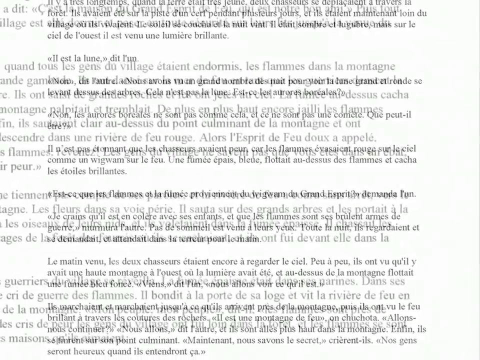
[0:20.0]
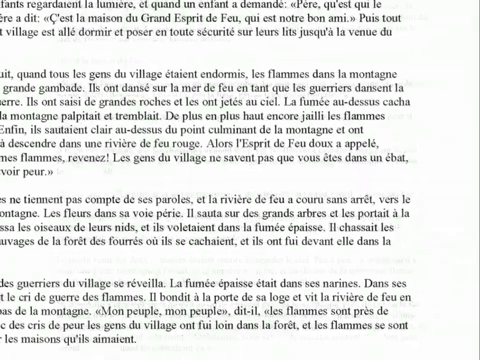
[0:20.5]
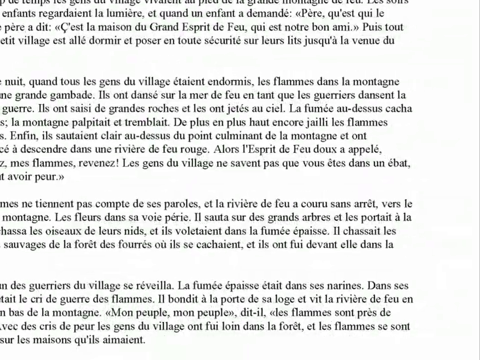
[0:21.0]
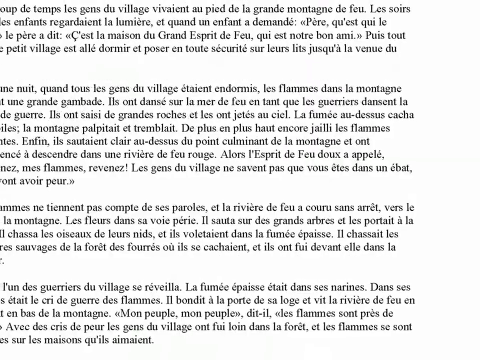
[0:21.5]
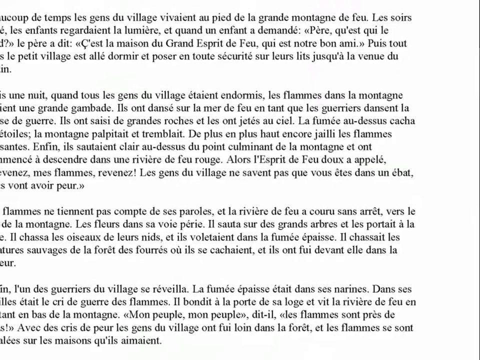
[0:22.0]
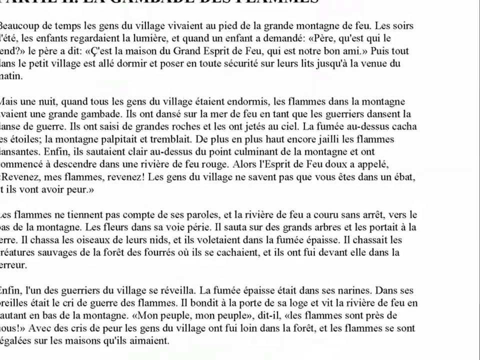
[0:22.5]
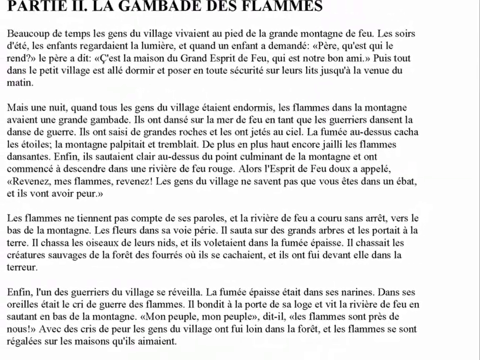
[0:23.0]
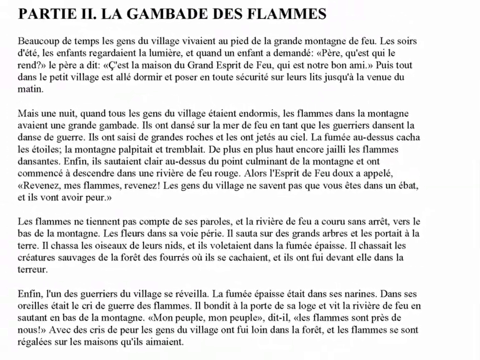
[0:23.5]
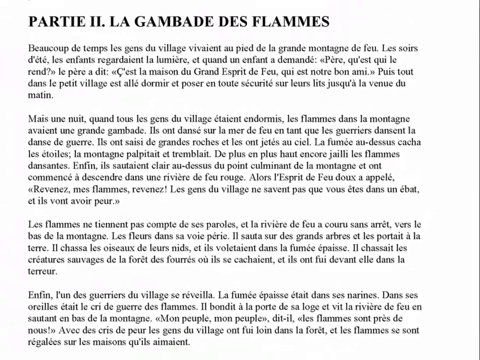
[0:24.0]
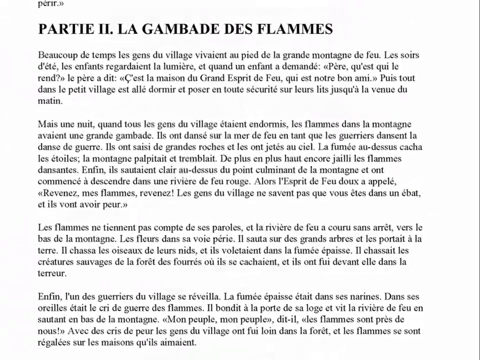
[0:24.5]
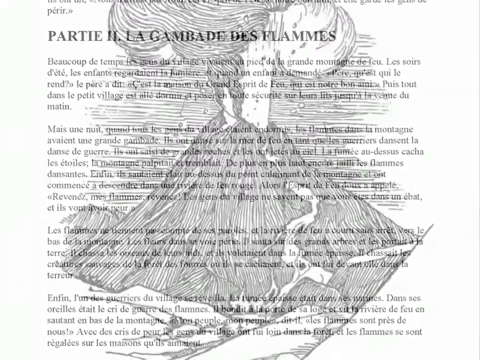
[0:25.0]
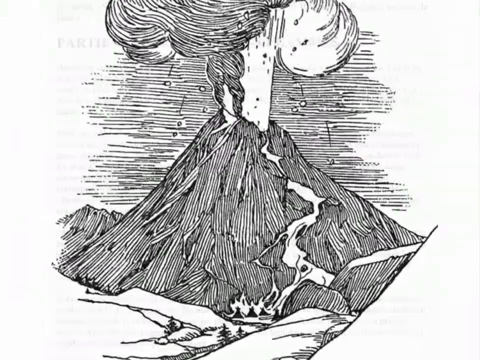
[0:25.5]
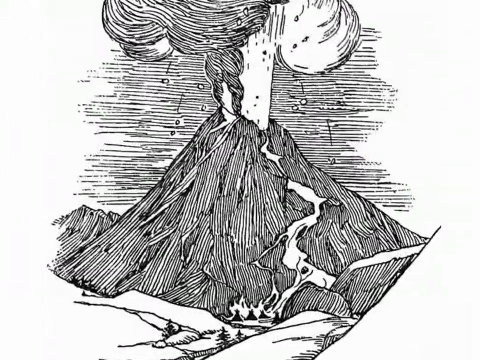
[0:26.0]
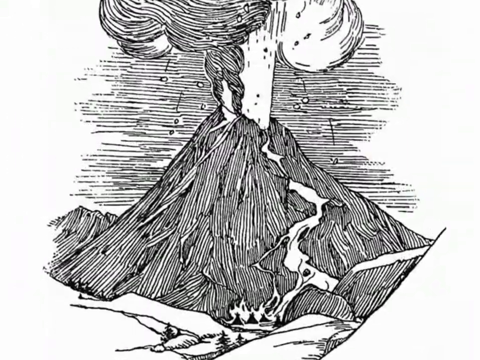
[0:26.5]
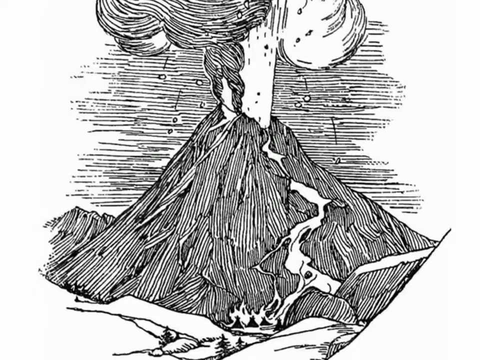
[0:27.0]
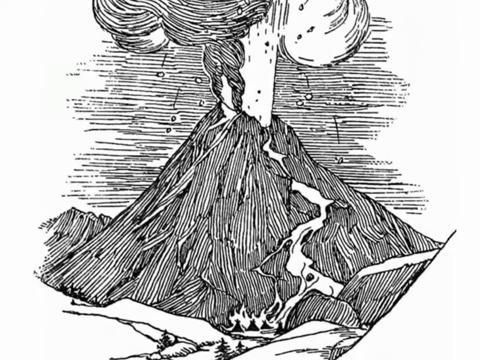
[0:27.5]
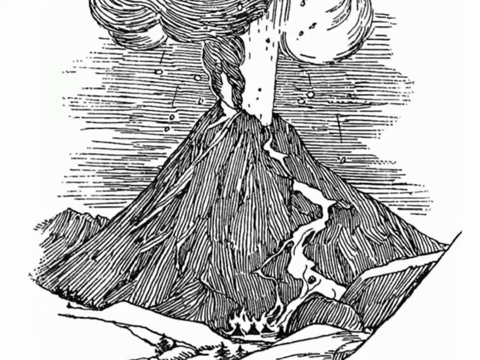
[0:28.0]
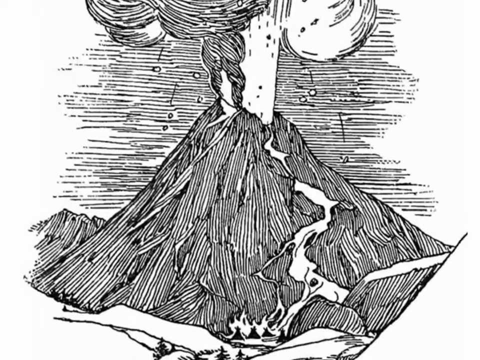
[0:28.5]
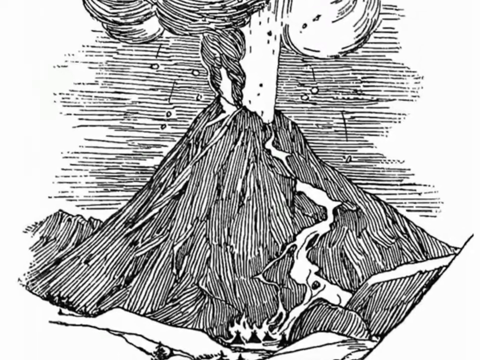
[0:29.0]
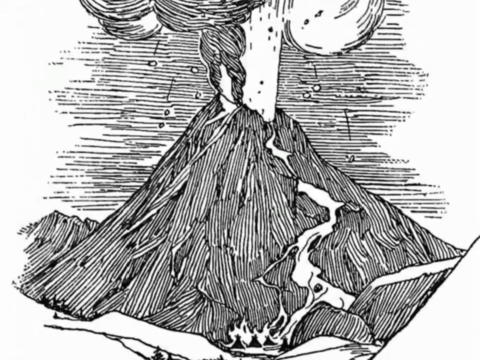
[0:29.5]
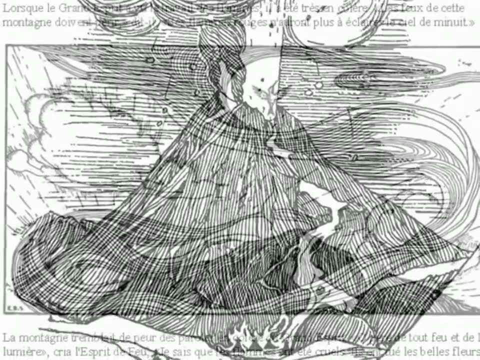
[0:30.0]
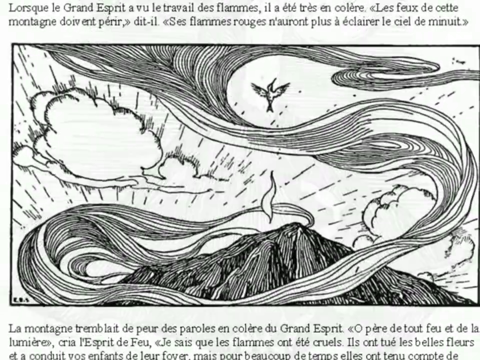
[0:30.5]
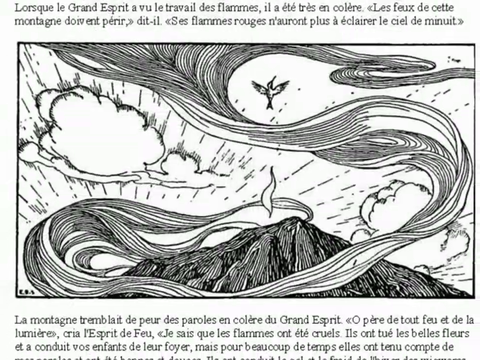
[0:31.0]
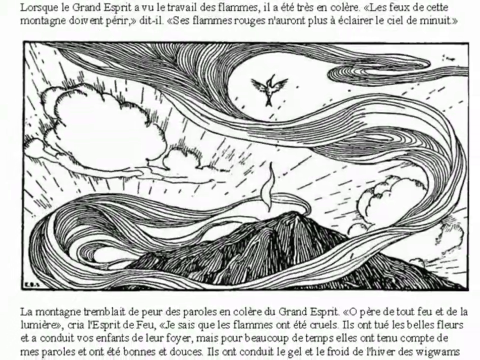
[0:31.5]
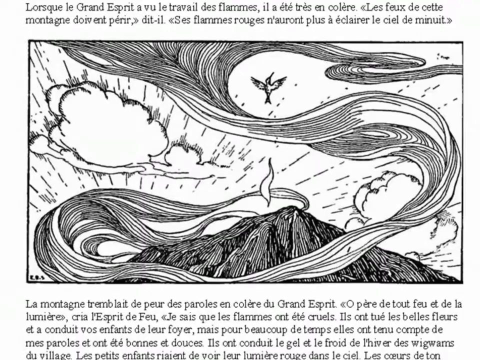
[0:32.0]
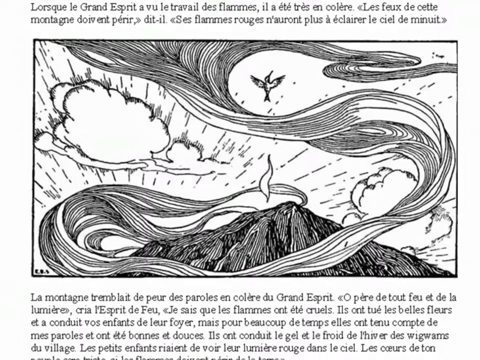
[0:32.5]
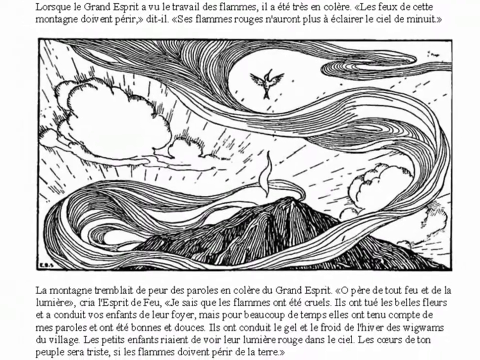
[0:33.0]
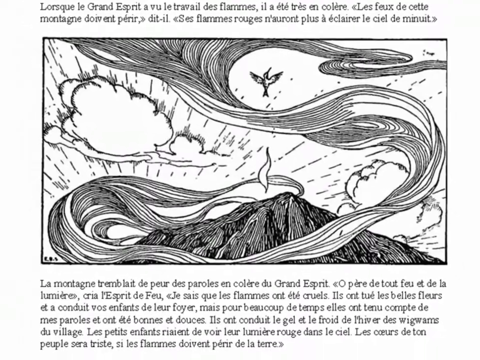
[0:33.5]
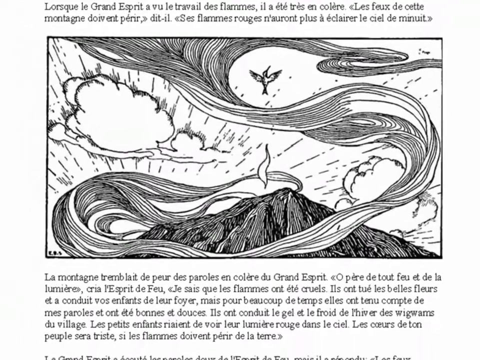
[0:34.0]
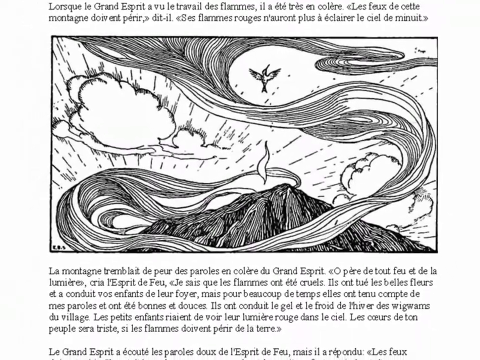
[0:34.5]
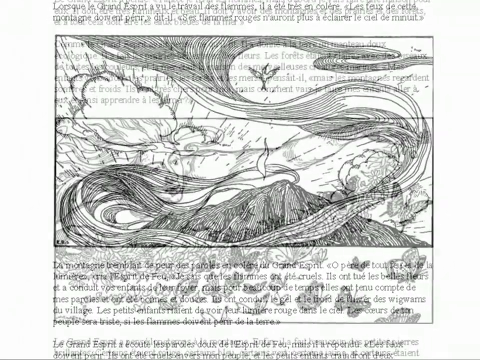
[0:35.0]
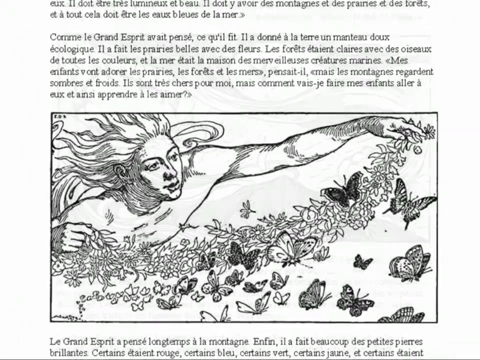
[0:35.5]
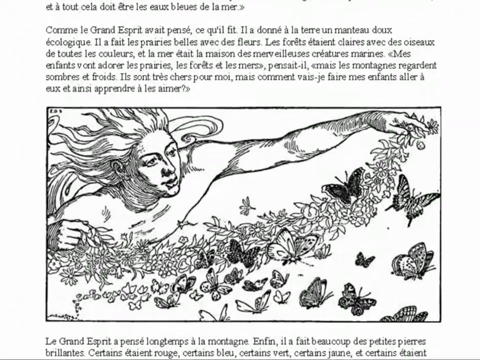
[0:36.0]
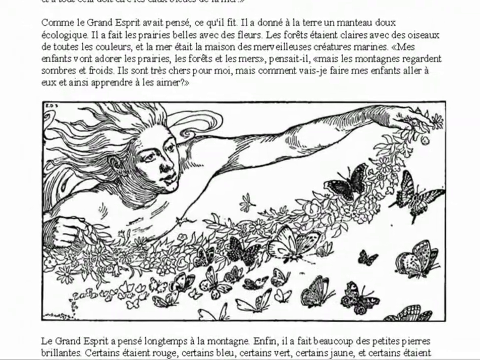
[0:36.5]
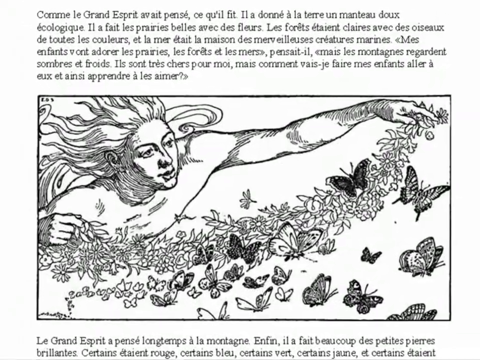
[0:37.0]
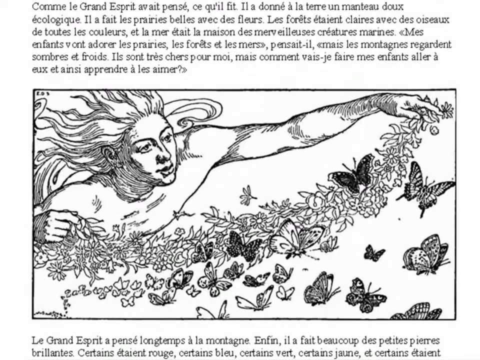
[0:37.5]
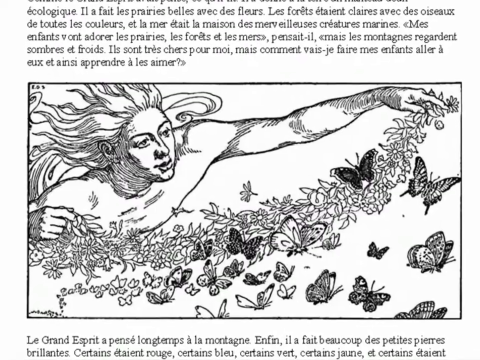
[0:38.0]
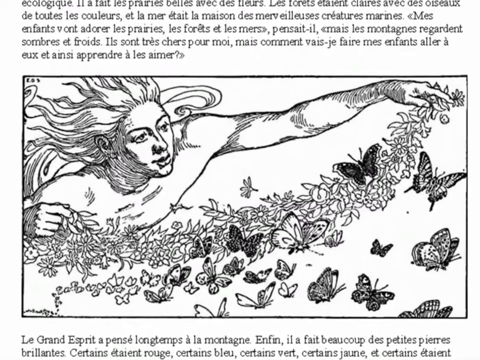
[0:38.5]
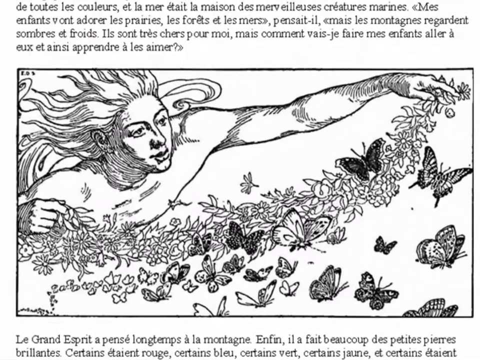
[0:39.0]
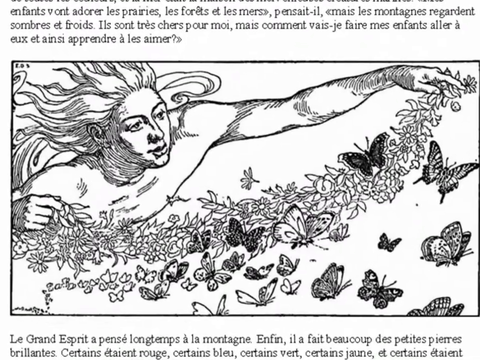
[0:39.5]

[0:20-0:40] The page of foreign-language text continues to be shown. After a transition, what appears to be another page full of foreign-language text appears, with title text at the top and body text below it. Another transition brings a pencil drawing of an erupting volcano, drawn with thick, multiple lines running lengthwise. What appears to be a river of lava runs down its side, snaking left and right. A lot of smoke comes out of the volcano, a haze in the background is represented by multiple horizontal lines, and rolling hills are in front of the volcano. The camera slowly zooms in on the erupting volcano. After another transition, a page of text appears with a small pencil drawing in the center, apparently of a mountain with a bird flying upward and clouds in the background; lines that appear to indicate wind currents are drawn forward across the sky. Another transition shows a page with a pencil drawing at the bottom of what appears to be a person, perhaps an angel, waving their arms forward, with flowers coming out tracing where their arms go. There are butterflies in the flowers.